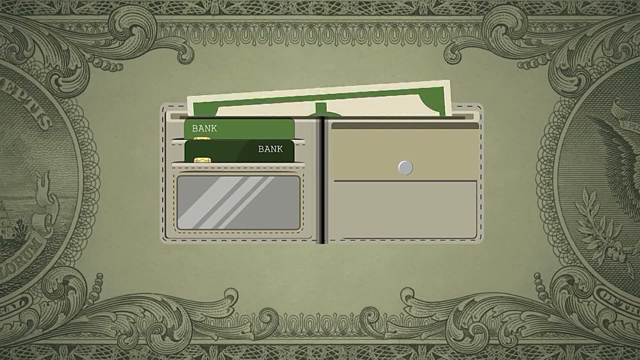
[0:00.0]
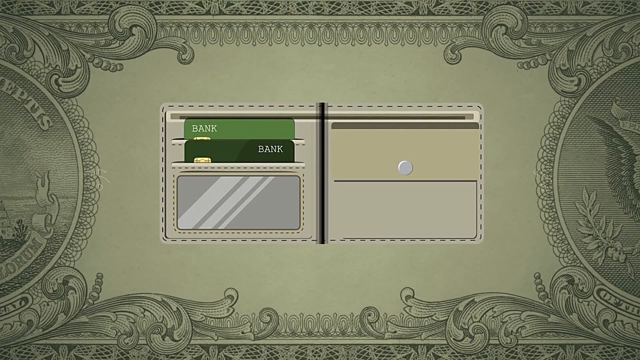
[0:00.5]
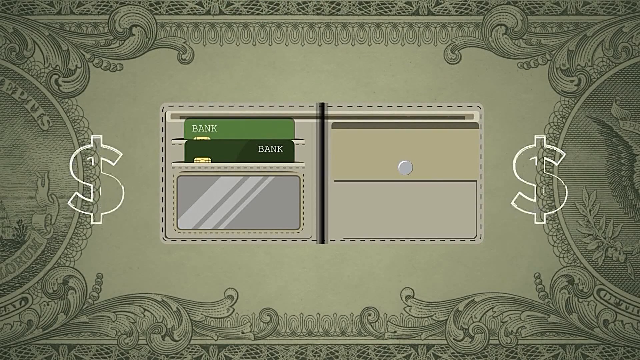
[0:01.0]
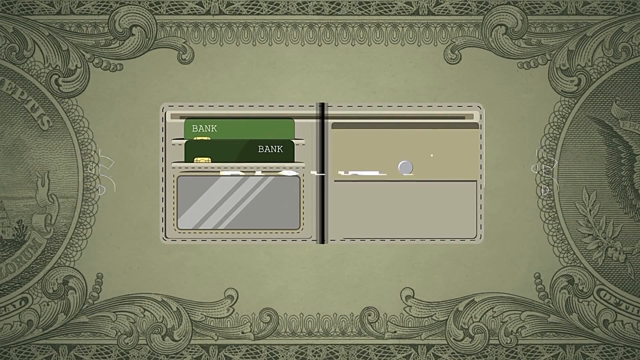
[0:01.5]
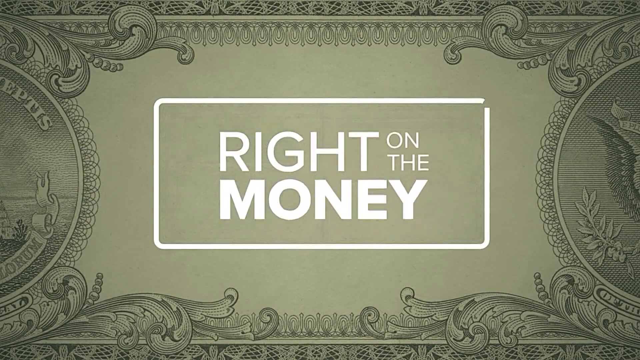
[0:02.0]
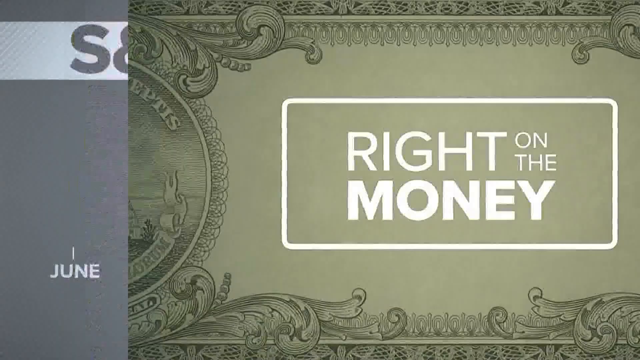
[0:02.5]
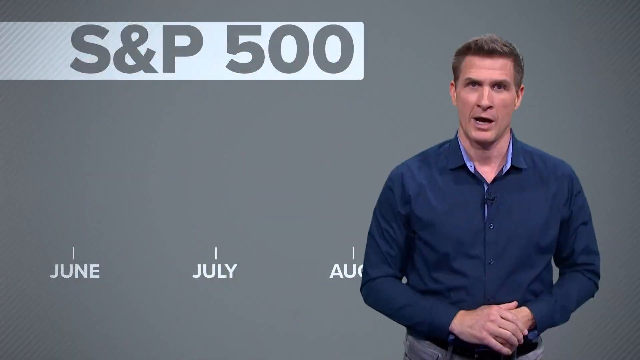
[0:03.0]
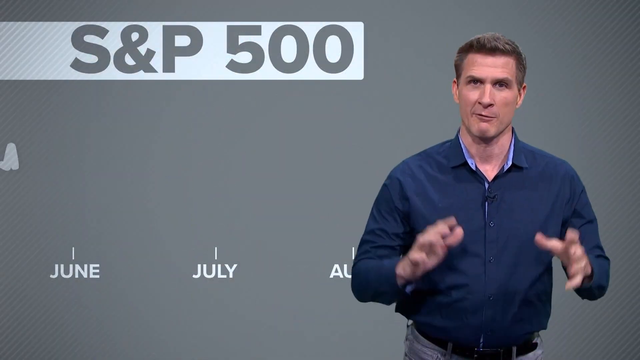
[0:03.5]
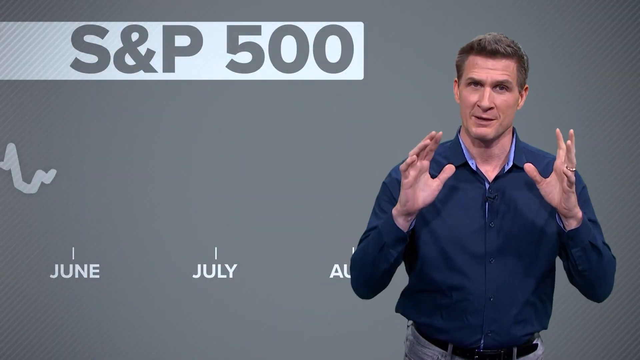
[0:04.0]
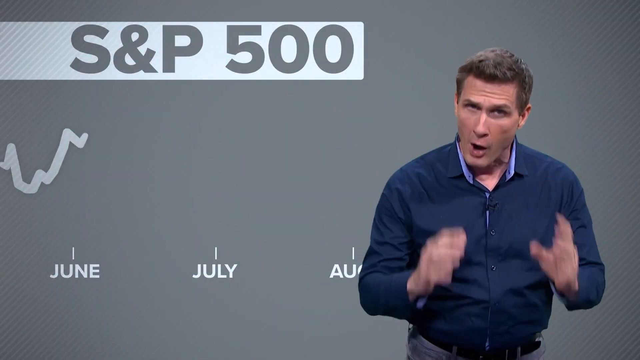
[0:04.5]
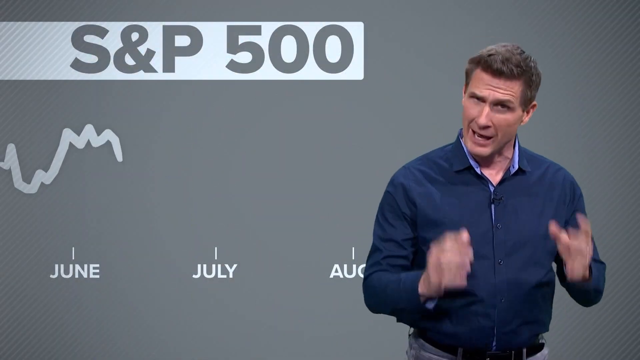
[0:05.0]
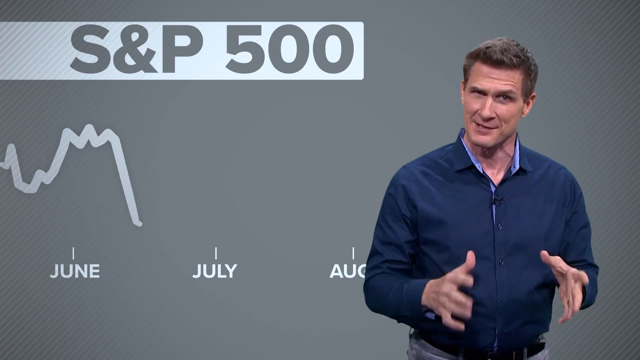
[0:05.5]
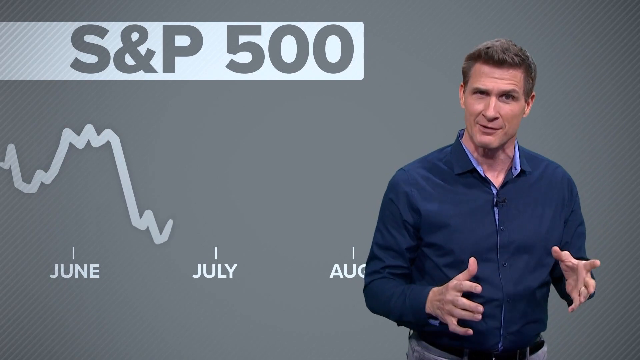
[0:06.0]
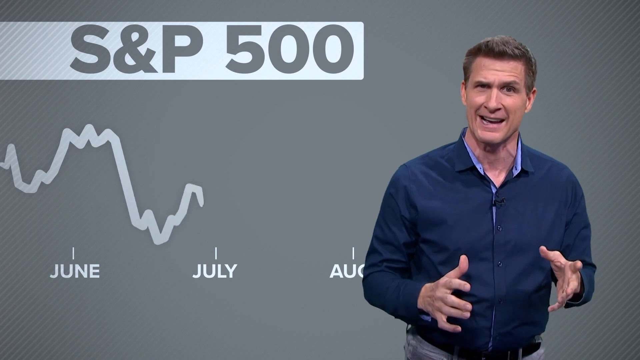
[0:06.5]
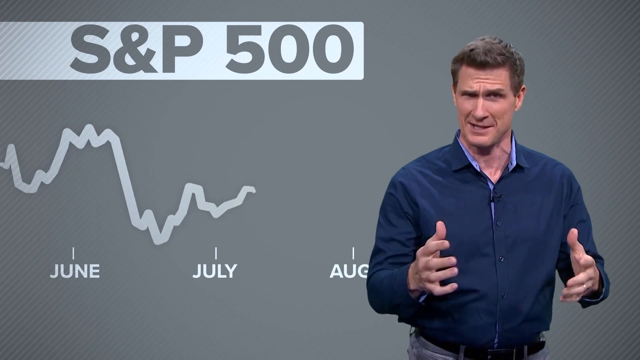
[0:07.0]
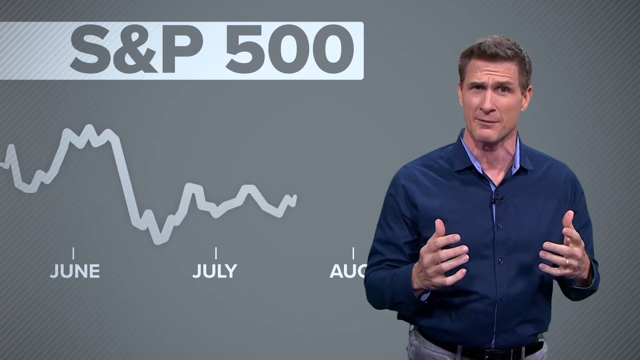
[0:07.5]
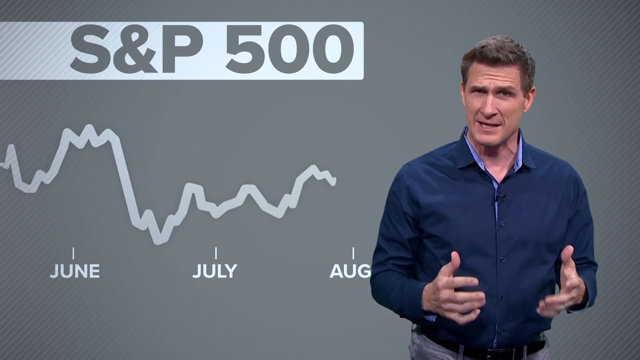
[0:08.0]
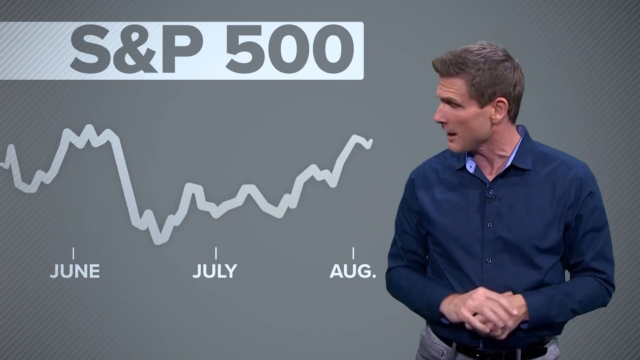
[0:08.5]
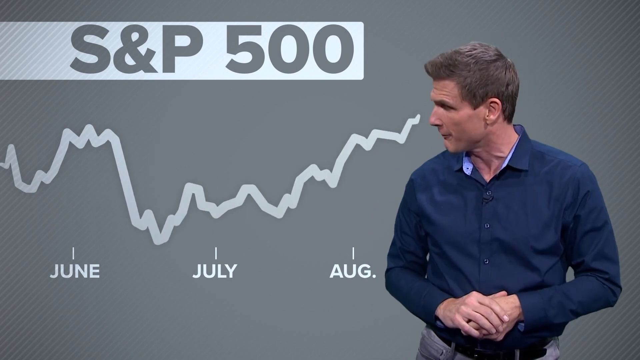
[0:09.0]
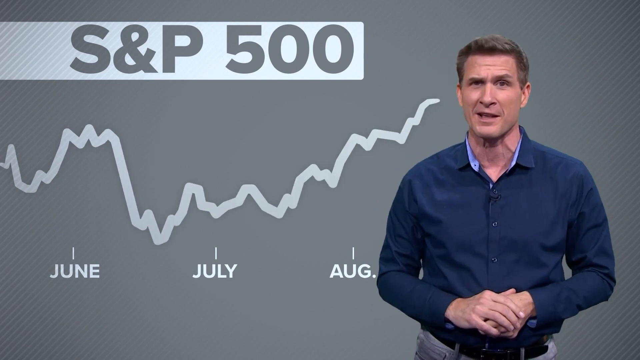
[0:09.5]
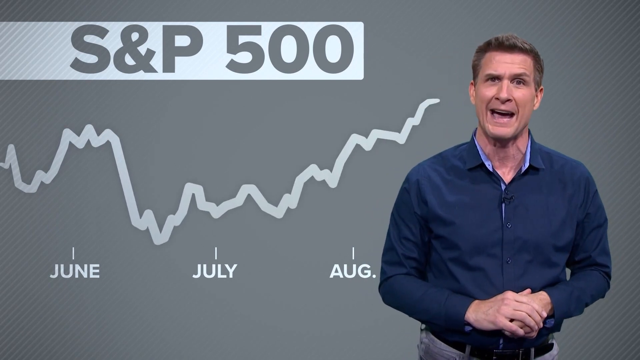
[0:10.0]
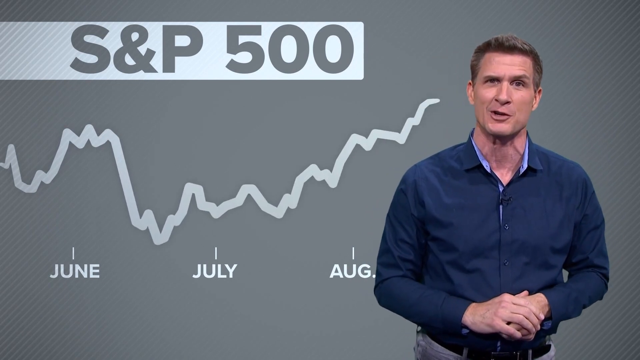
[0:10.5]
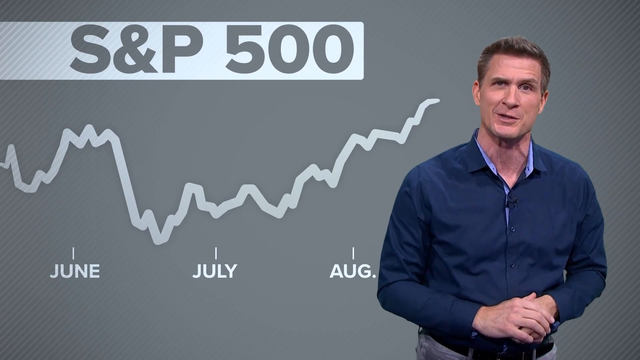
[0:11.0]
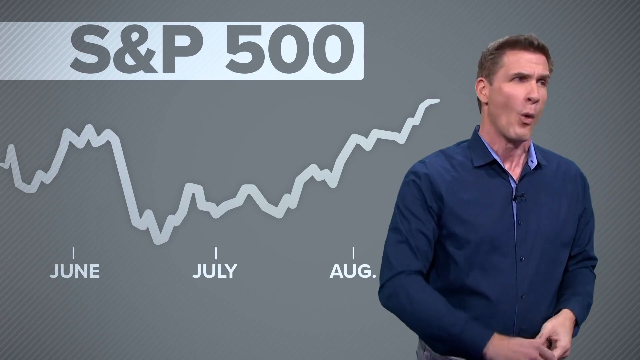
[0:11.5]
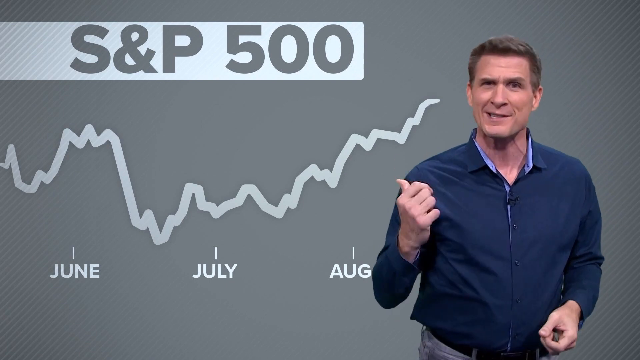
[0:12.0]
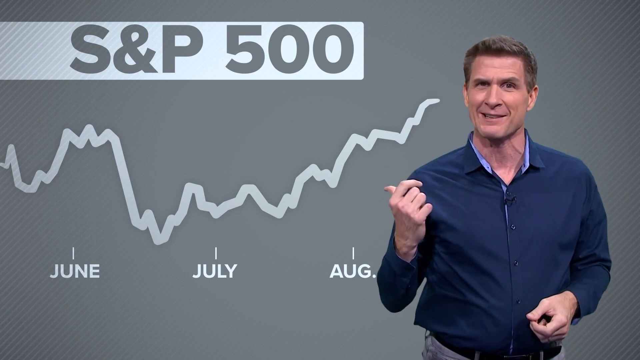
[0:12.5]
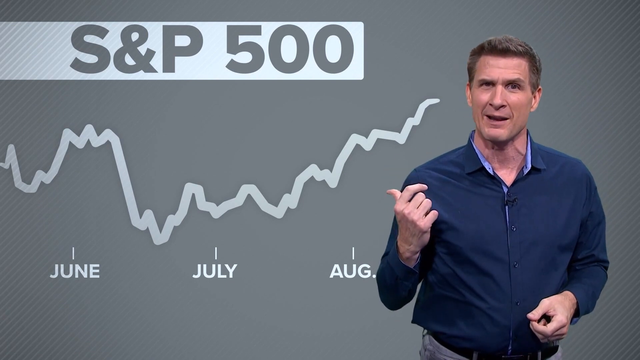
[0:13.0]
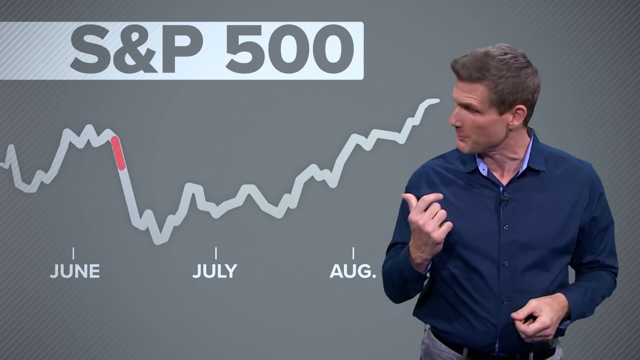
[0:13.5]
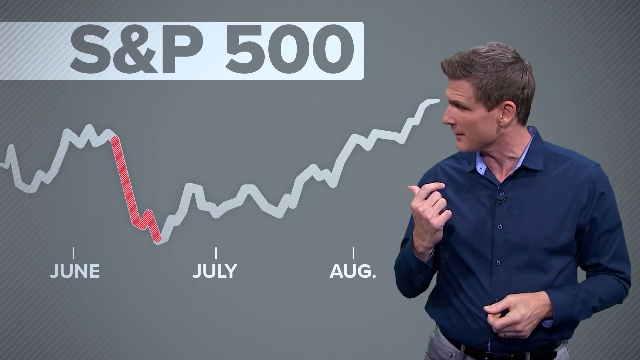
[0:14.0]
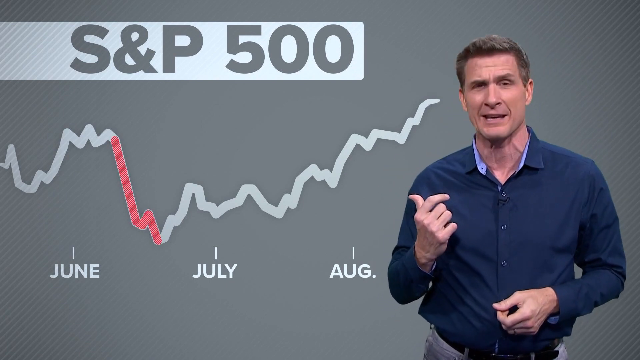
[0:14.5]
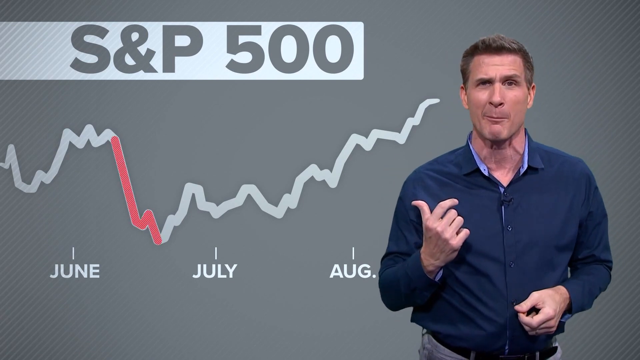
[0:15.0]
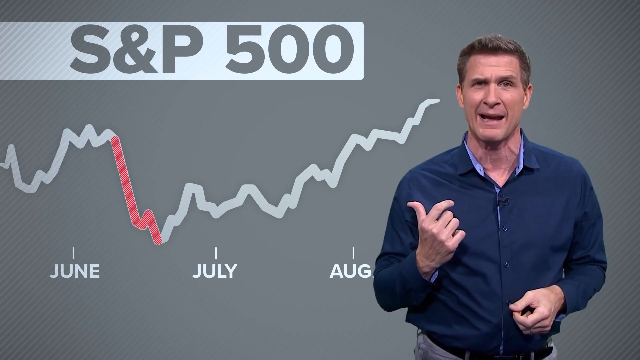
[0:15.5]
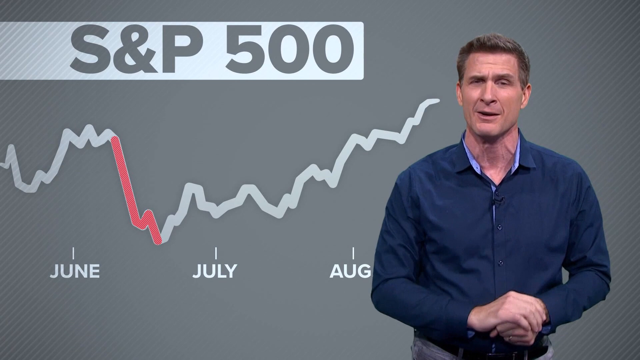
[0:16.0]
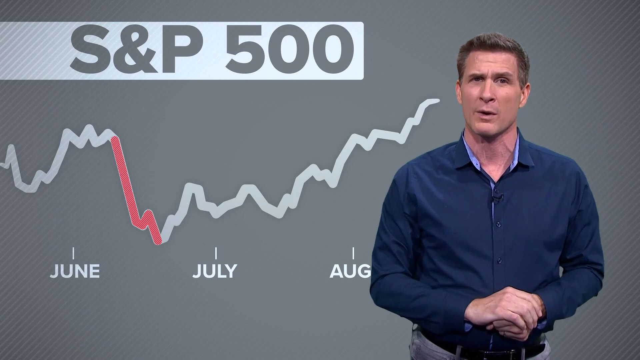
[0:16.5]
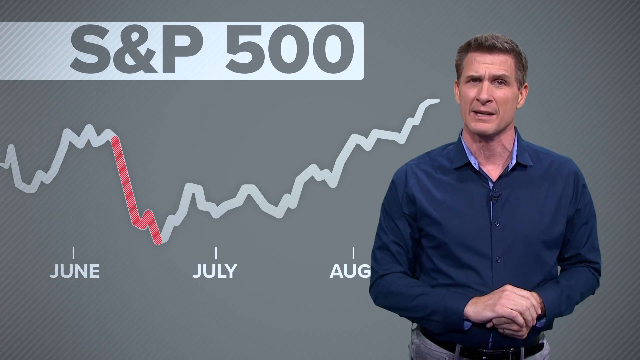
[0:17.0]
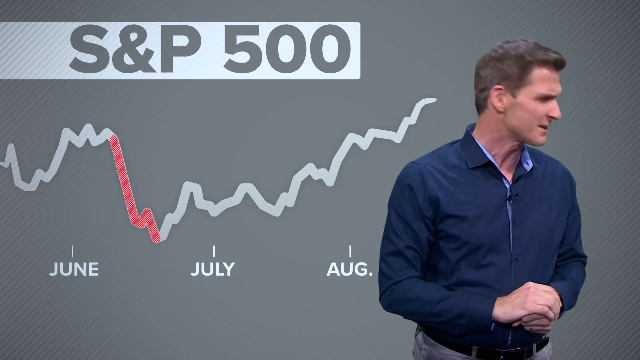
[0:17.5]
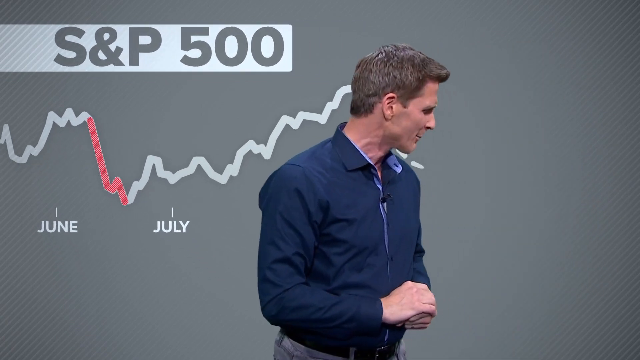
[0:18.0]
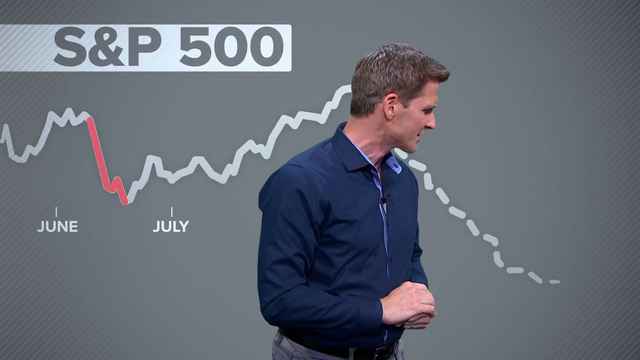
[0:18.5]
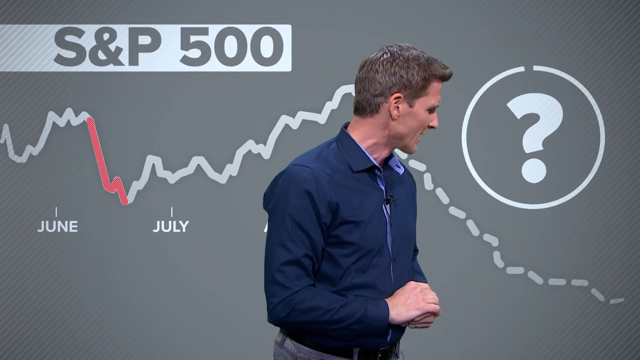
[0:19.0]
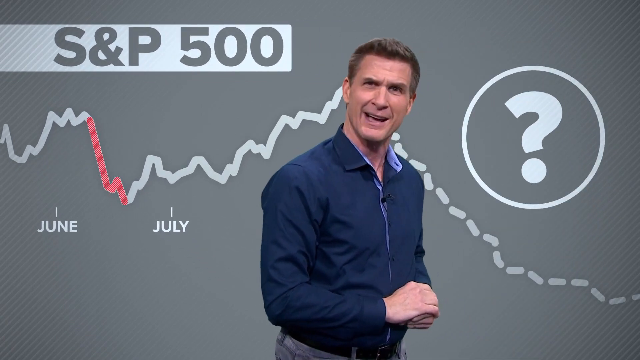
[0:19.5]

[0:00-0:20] The video opens with a graphic of a wallet with dollar signs around it. A man in a blue jacket with short brown hair, who looks to be middle-aged or a little older, then appears, apparently talking about the stock market. On the gray wall behind him is a line with peaks and valleys, kind of like a graph line, covering June, July and August; the line and the month names are in white on the gray background. At the very top corner, text reads "S&P 500". The line takes a sharp dive down and turns into a line made of dashes, possibly representing the instability of the stock market, while the presenter appears very animated as he talks.